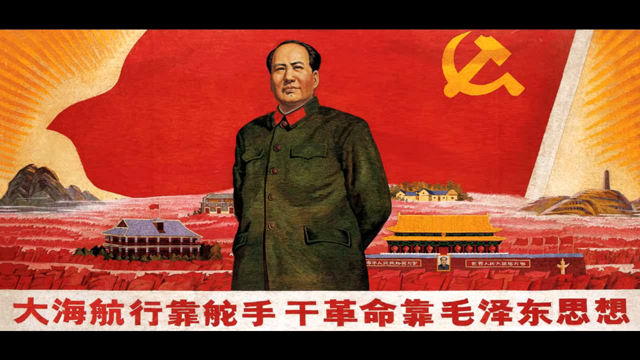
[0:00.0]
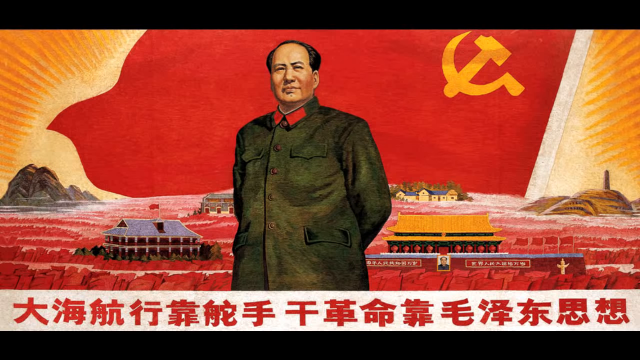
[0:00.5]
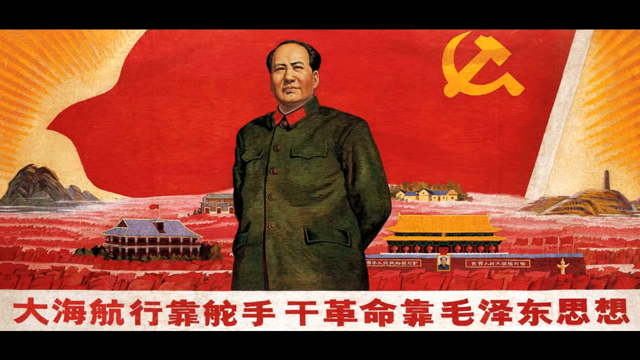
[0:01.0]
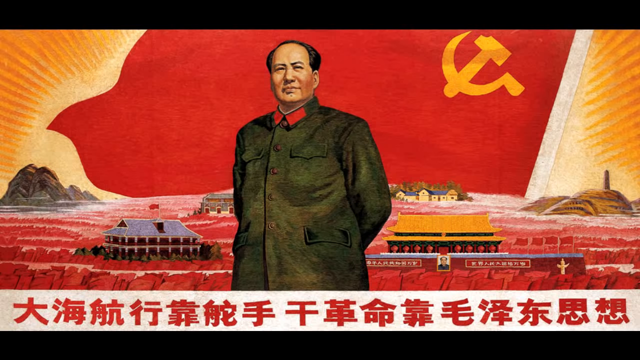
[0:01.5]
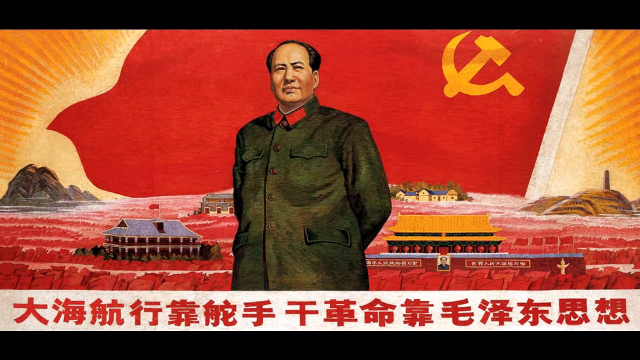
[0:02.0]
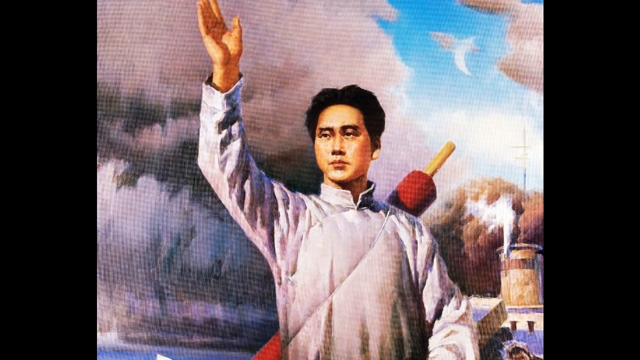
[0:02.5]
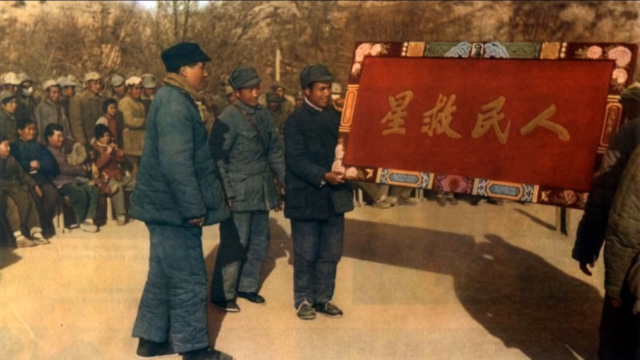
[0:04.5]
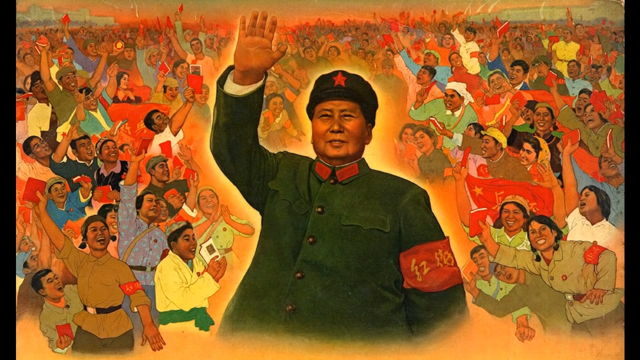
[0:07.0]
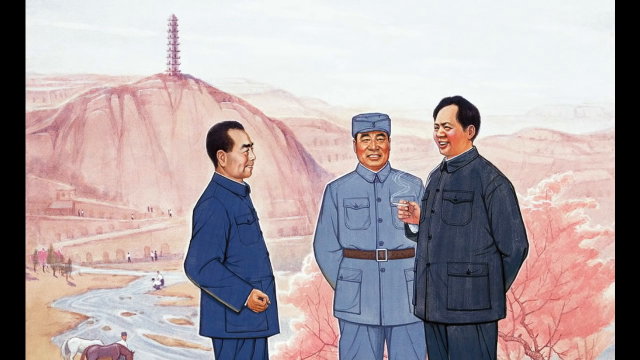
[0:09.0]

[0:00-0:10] The video appears to be some sort of governmental propaganda video featuring Chairman Mao of China. It opens on a still shot of what looks like a classic old-style propaganda poster. A red flag with a hammer and sickle insignia takes up most of the sky, with dramatic yellow sunbeams on either side. Beneath it is a vast field of either sacks of grain or red flags (it is hard to tell) and some traditional Chinese buildings. In the center, looming, is Chairman Mao himself, wearing a dark green military-style jacket with his hands behind his back. Chinese text in red lettering on a white background runs across the bottom. Fast edits then cut to various propaganda images, including some that look like photographs of actual Chinese citizens.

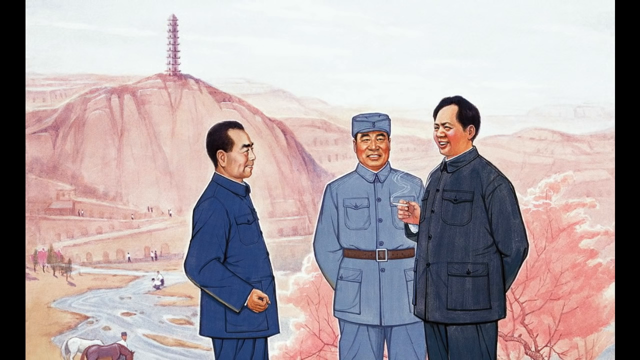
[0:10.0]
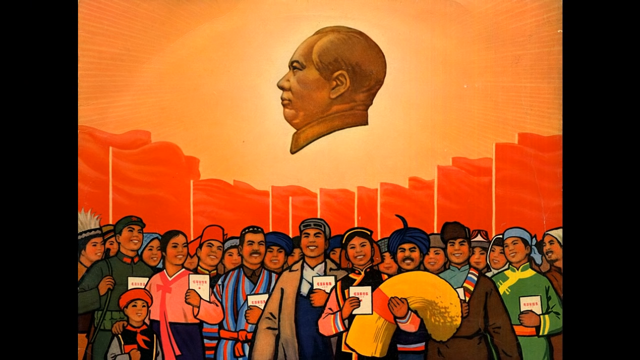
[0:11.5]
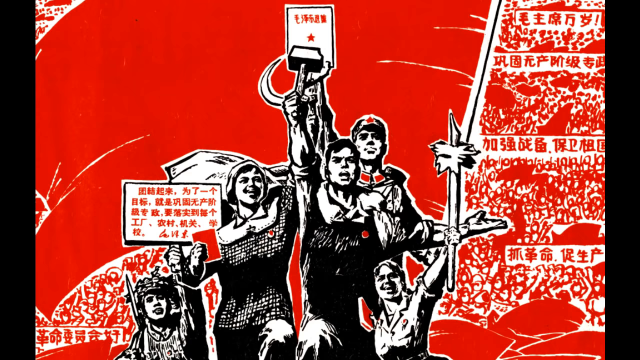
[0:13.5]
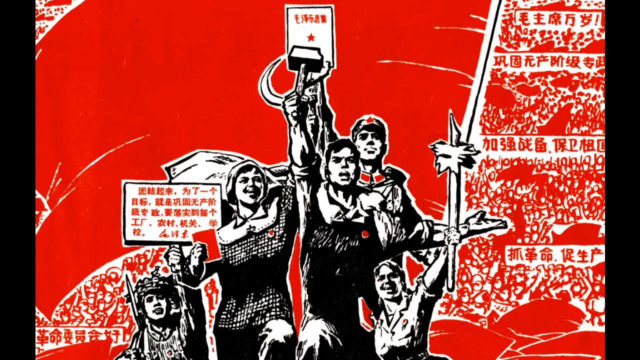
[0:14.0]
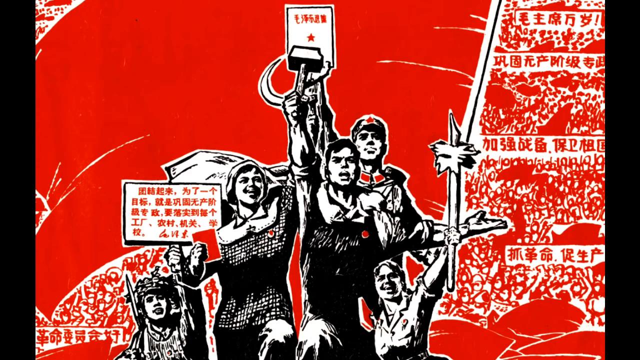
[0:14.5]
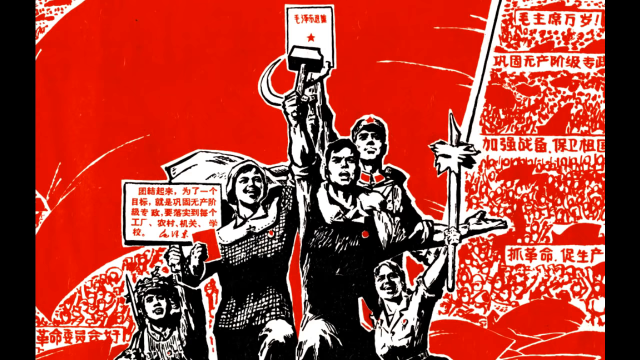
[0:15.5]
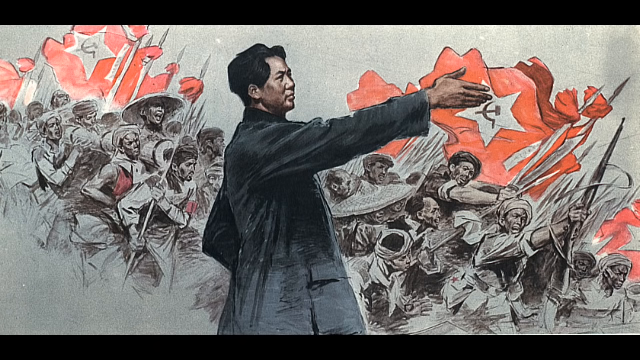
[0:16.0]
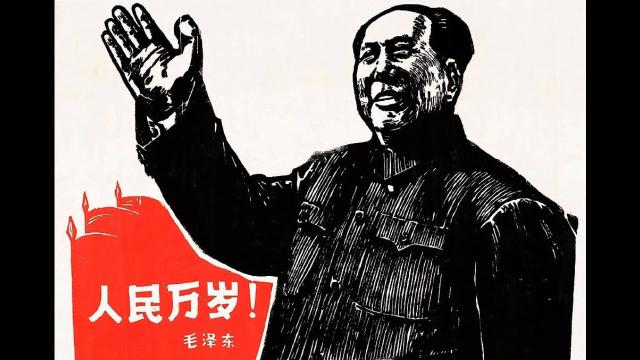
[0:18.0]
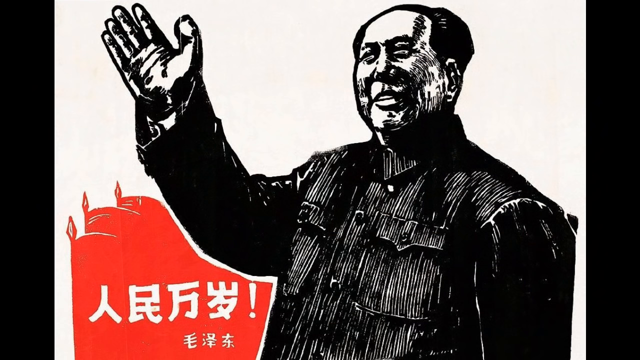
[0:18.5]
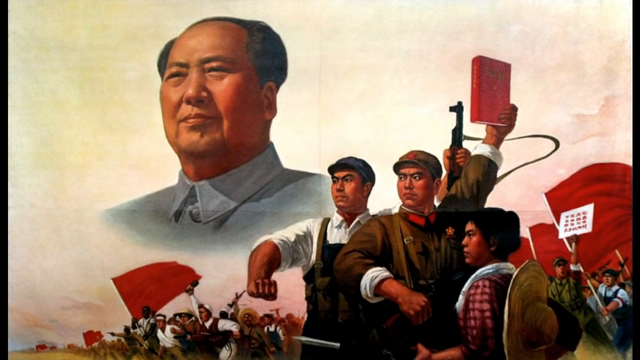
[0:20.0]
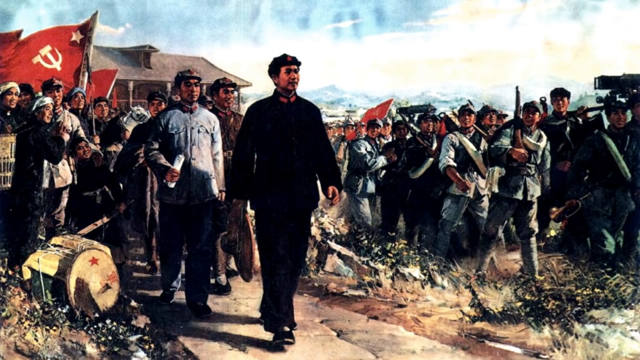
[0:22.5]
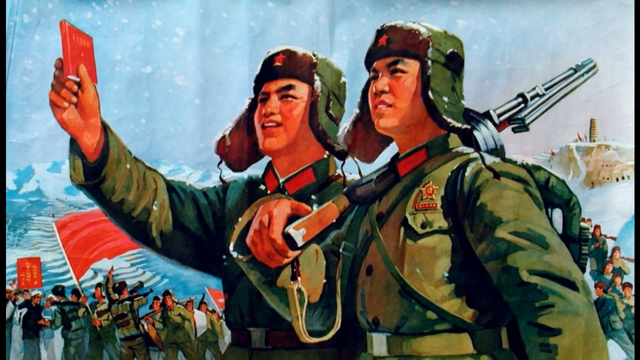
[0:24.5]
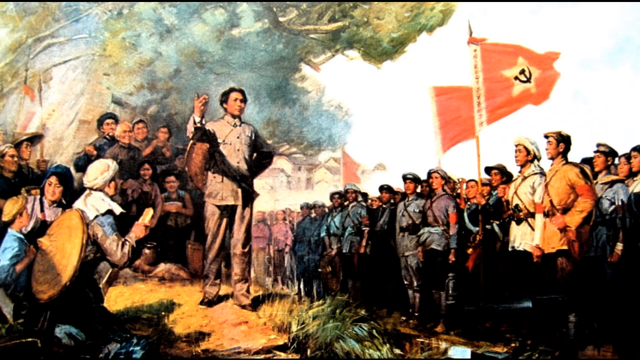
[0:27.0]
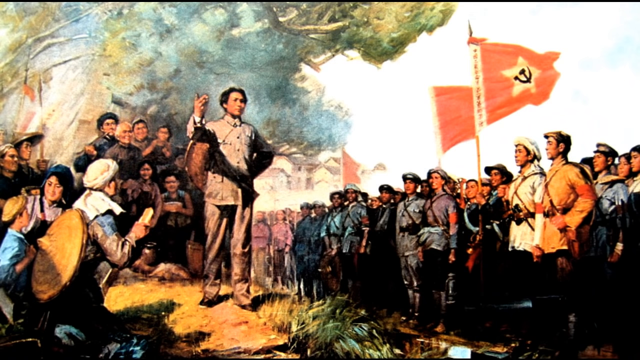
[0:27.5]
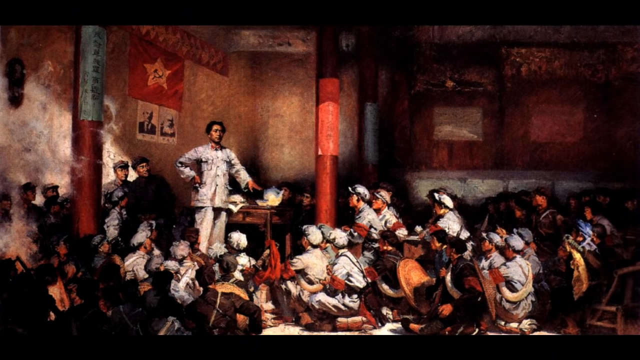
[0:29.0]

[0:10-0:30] A montage of propaganda-style artwork and posters featuring Chairman Mao of China follows, with maybe at least half a dozen different images. It begins with three Chinese gentlemen of late middle age standing in the foreground, addressing each other in what looks like casual conversation. They are all smiling, and at least one of them appears to be smoking a cigarette. In the background are some large hills or small mountains, some villages, it seems, and other citizens milling around. The image cuts to a floating head of Chairman Mao seen in side profile in an orange sky. Beneath it, a row of red flags waves in the wind, and across the bottom smiling, happy Chinese citizens all hold some sort of white pamphlet as they look up adoringly at the image of Chairman Mao. Another cut shows what looks like a kind of line-type or print-screen-style image of some Chinese youths, with a lot of red imagery and a lot of Chinese text. One of the youths holds up a hammer in his hand with a fierce expression on his face.